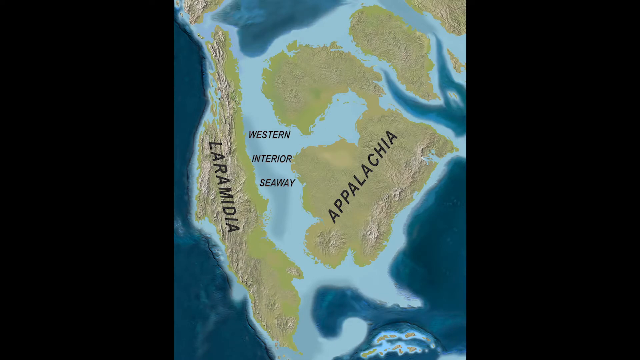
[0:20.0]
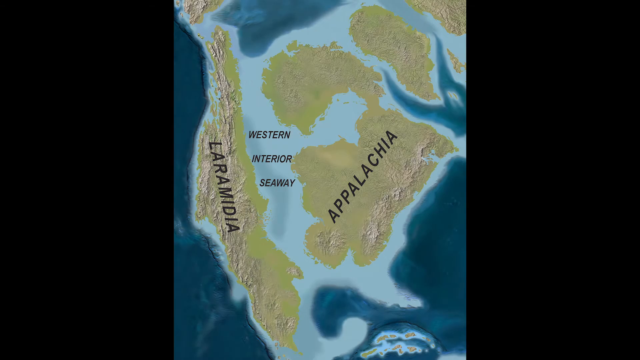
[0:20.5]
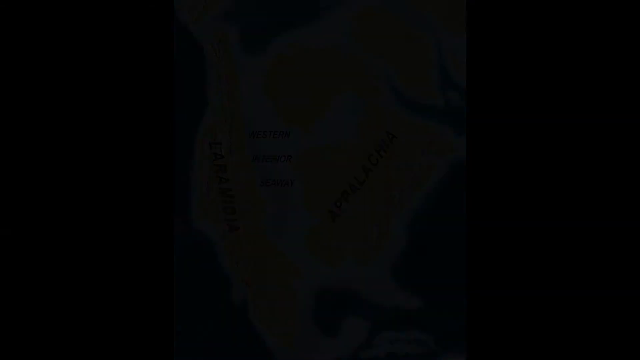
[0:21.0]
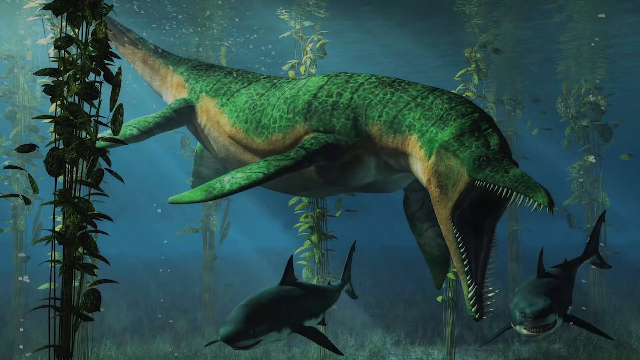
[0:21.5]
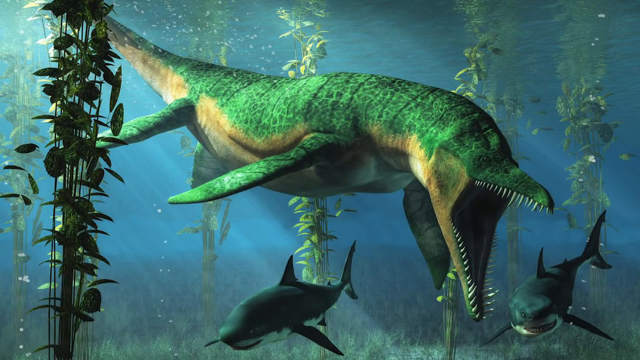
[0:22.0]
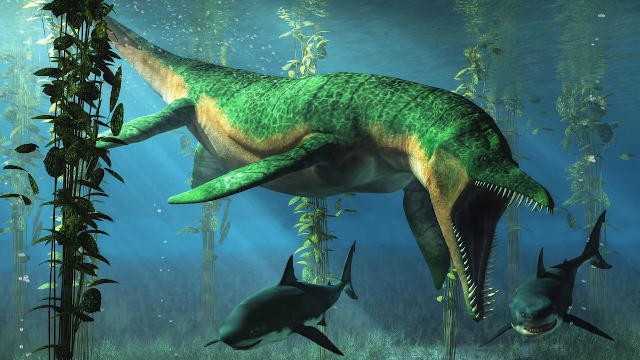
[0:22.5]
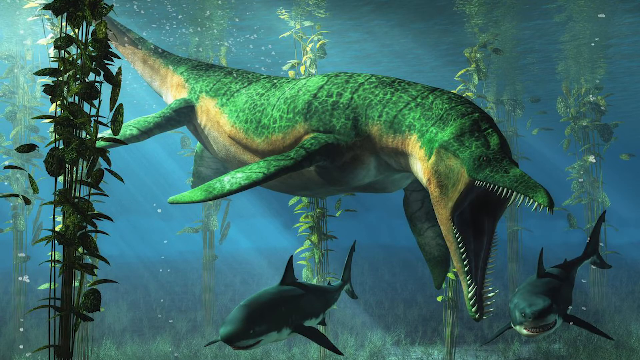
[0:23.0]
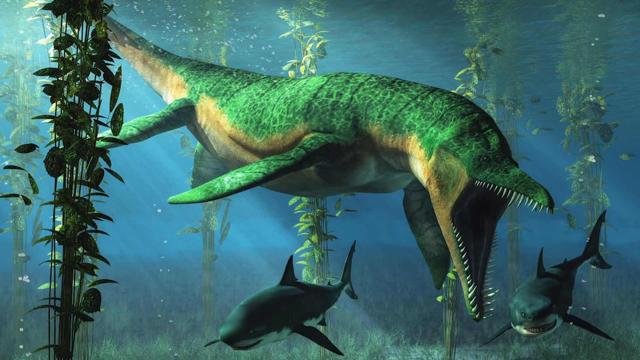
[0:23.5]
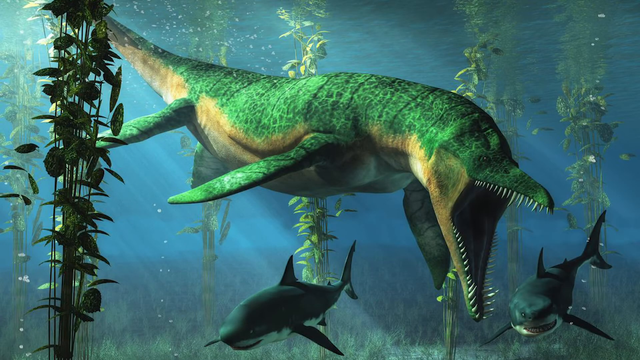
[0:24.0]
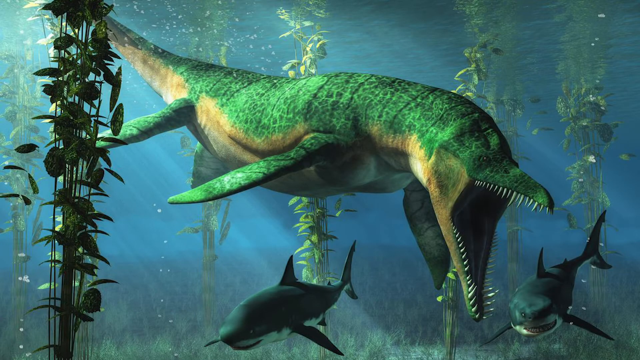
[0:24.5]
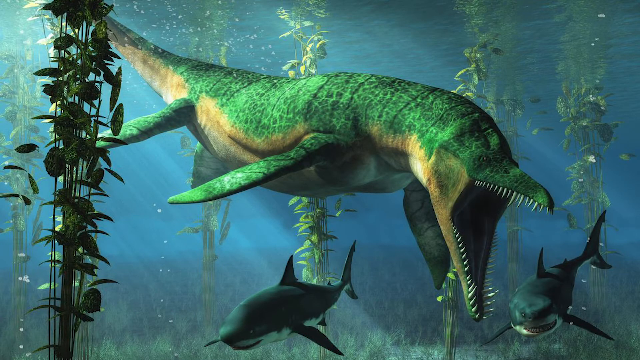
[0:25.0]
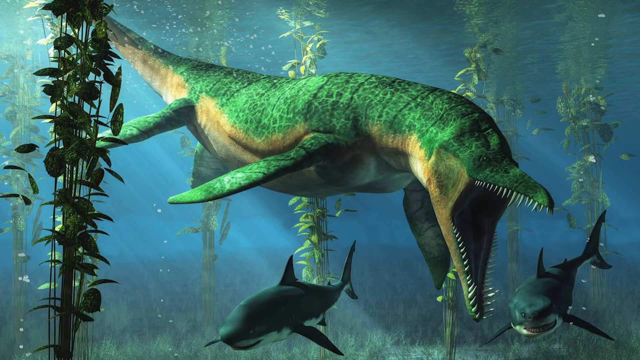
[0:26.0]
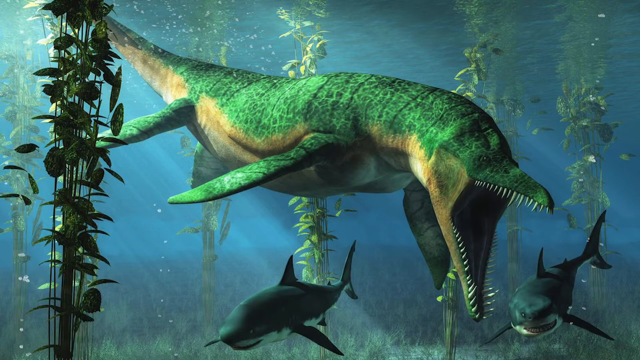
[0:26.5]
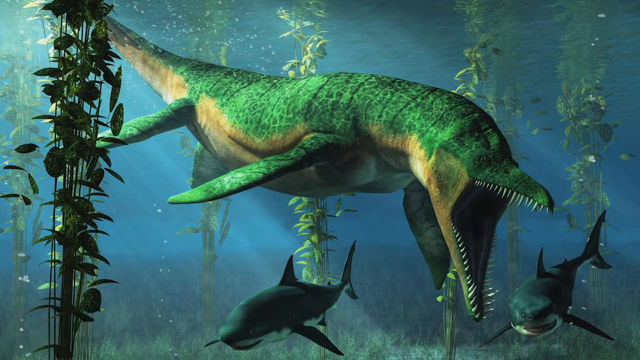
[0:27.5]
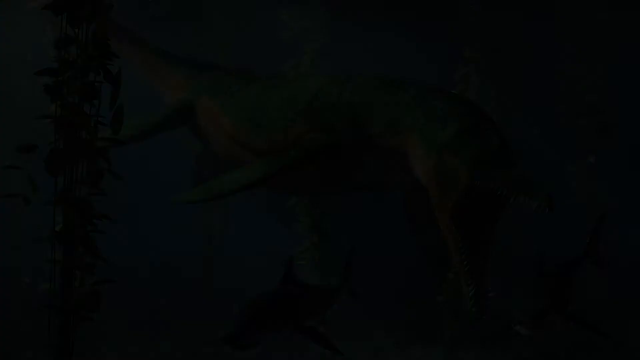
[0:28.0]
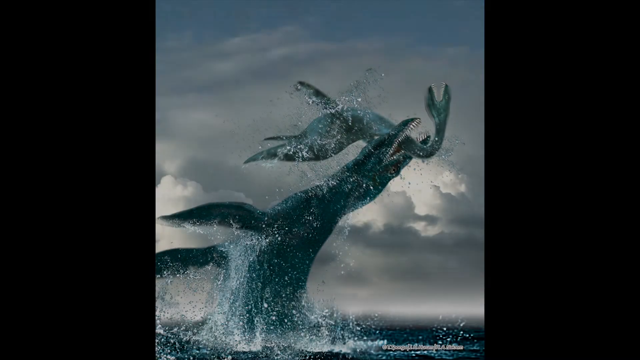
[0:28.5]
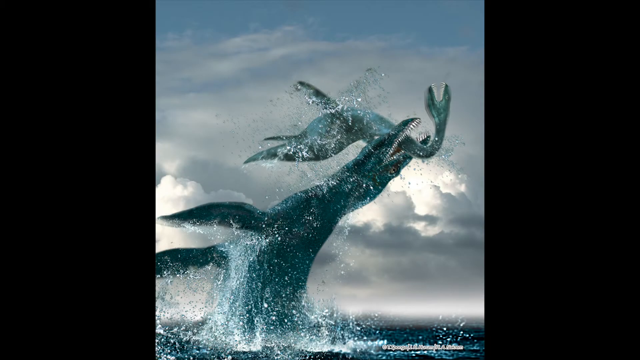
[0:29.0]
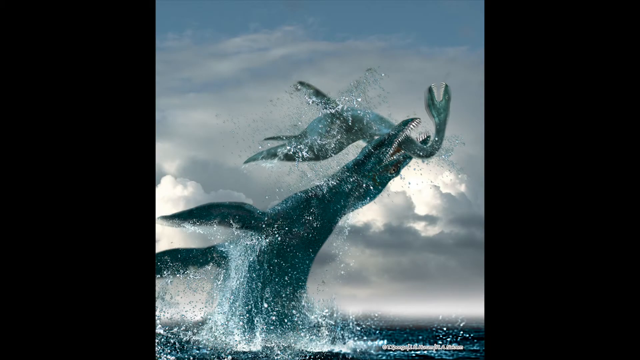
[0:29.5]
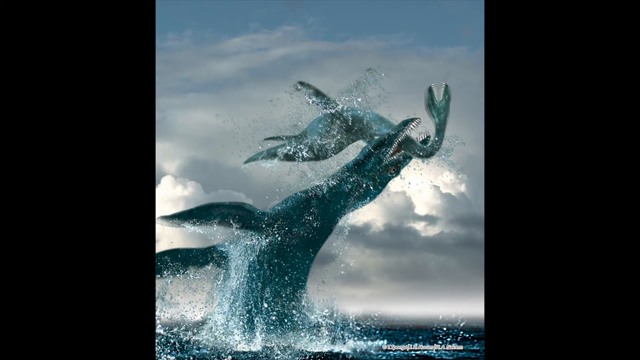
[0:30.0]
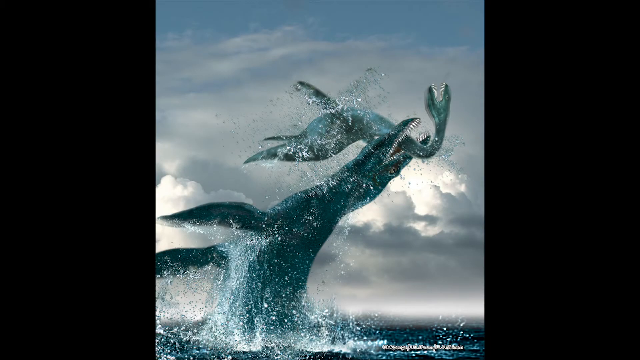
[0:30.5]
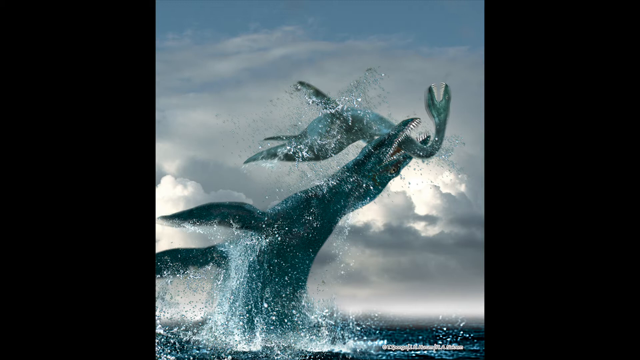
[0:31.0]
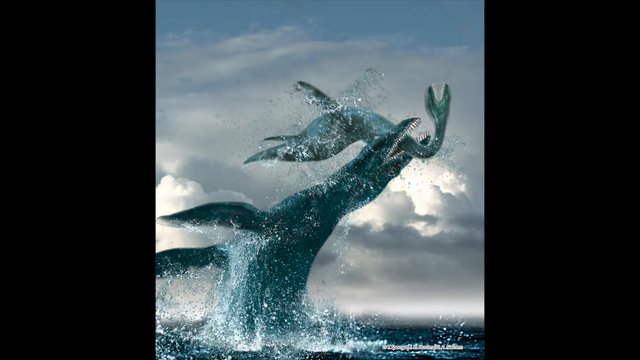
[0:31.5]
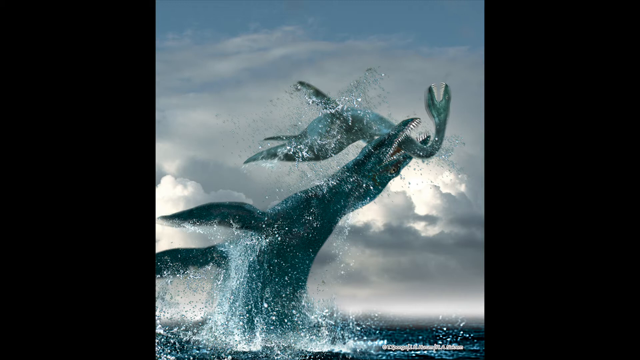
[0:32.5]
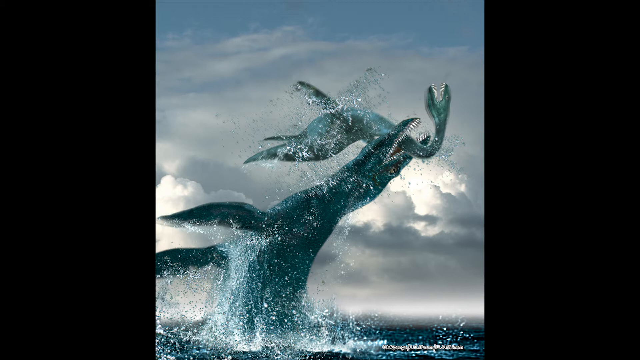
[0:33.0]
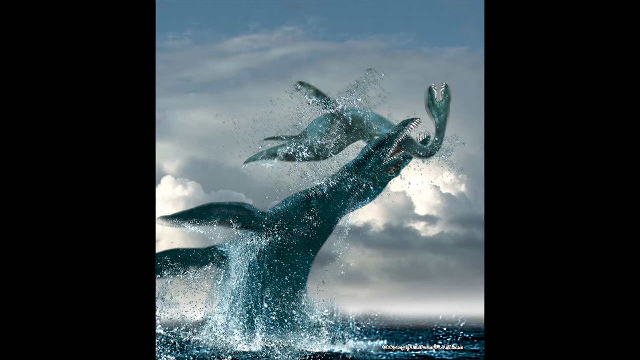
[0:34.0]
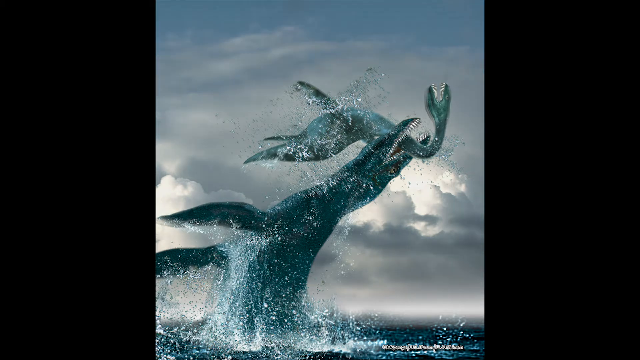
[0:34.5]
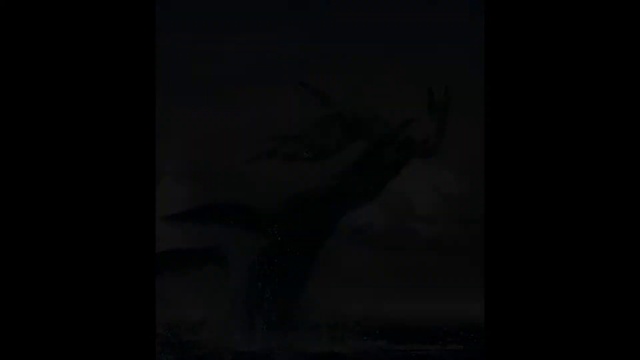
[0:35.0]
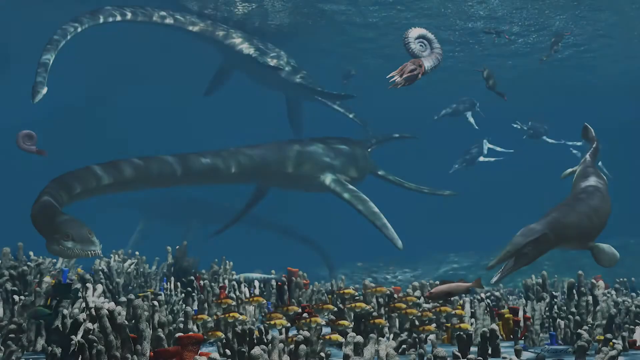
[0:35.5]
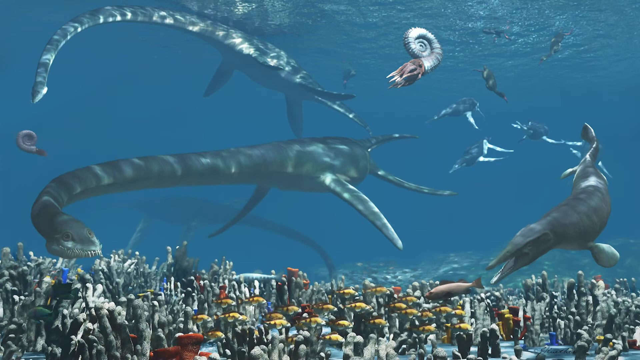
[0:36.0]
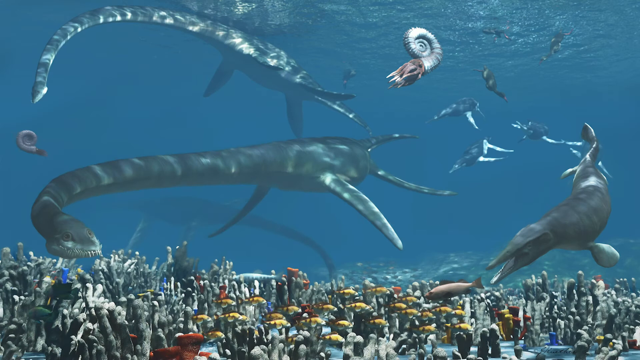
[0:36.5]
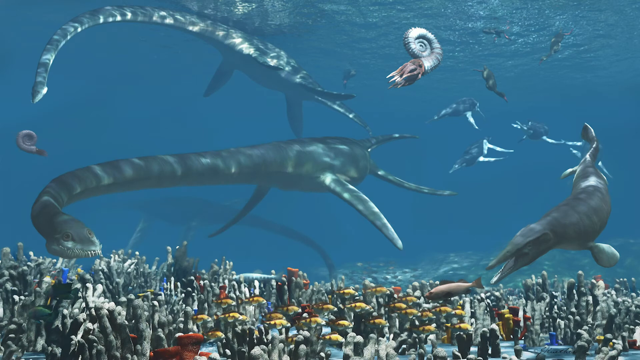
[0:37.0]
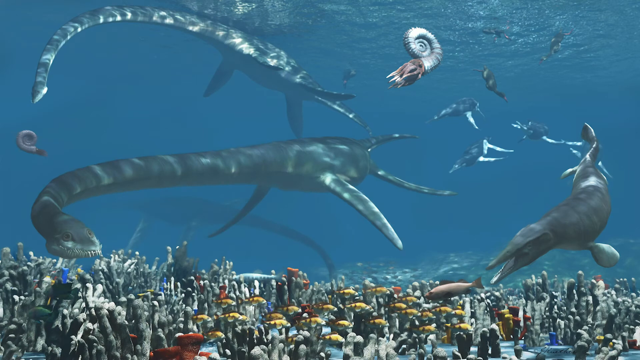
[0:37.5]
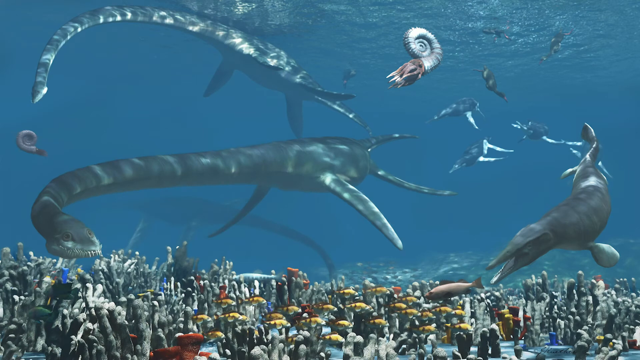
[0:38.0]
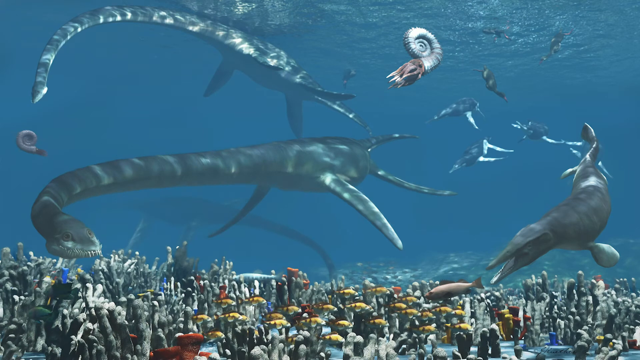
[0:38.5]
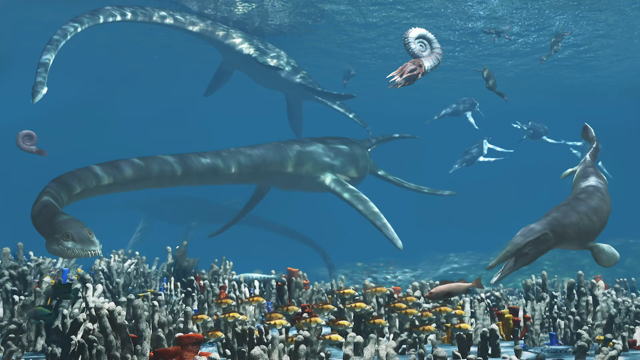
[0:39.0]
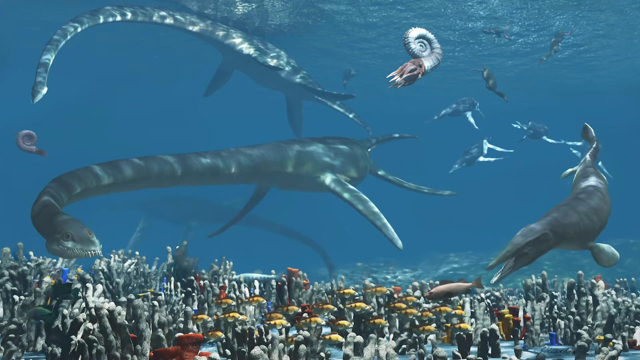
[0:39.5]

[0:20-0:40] A map shows what appears to be the world long ago. On the left is an elongated, thin vertical strip of land called Laramidia, which seems to be mountainous, with tan, rocky areas sticking out of it and some green surrounding them. To the right of it is a body of water labeled "Western Interior Seaway". To the right of that is more land, with rocky, tan, mountainous parts on its very right end. This landmass is shaped sort of like a bird with a large head and a little beak on the top portion, almost parallel with the top part of the land on the left near the top of the screen. As a bird, it would be looking down and to the left, with a thin neck and an oval, chicken-nugget-like body with a little hump coming out of its left side. It is labeled "Appalachia". To its top right is a very small, Africa-shaped landmass, and more landmass comes in from the top left and right corners as rounded triangles.